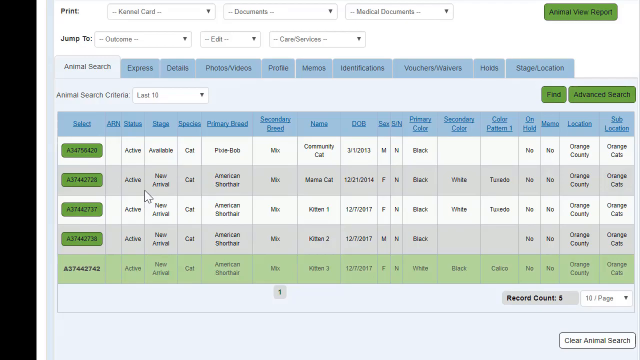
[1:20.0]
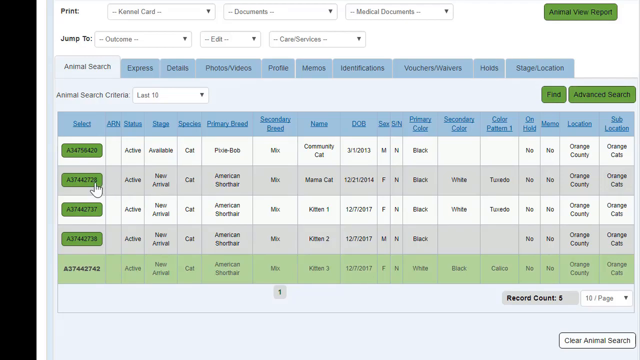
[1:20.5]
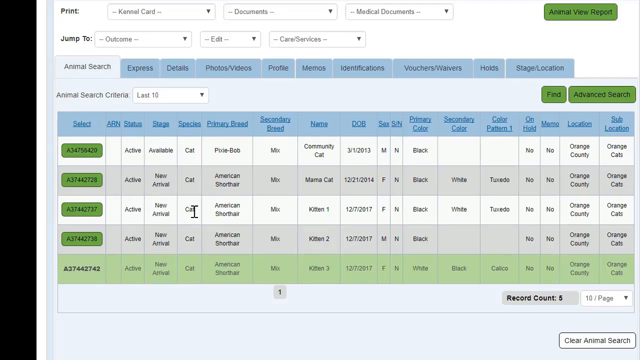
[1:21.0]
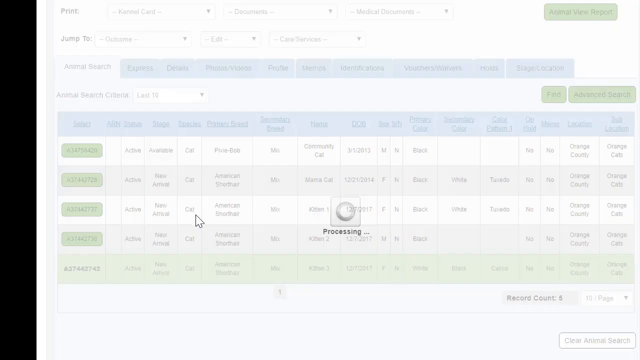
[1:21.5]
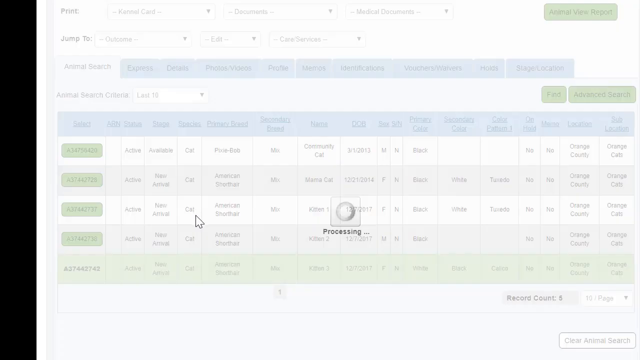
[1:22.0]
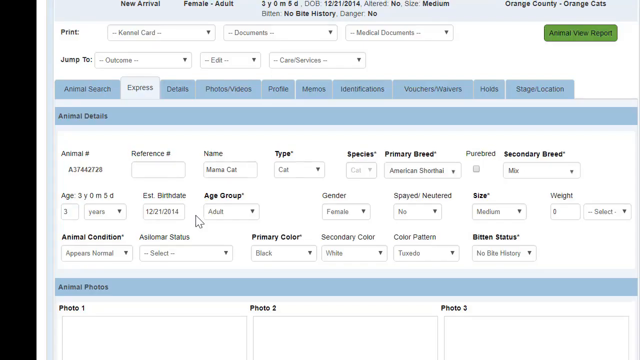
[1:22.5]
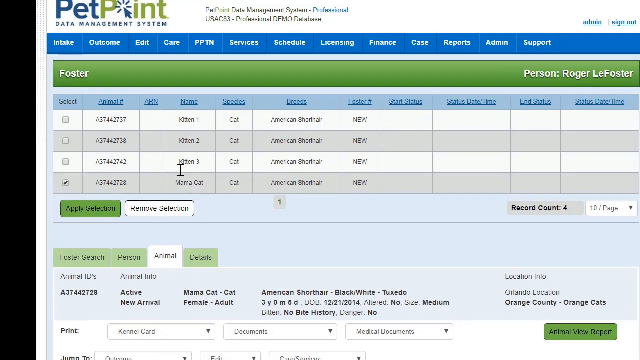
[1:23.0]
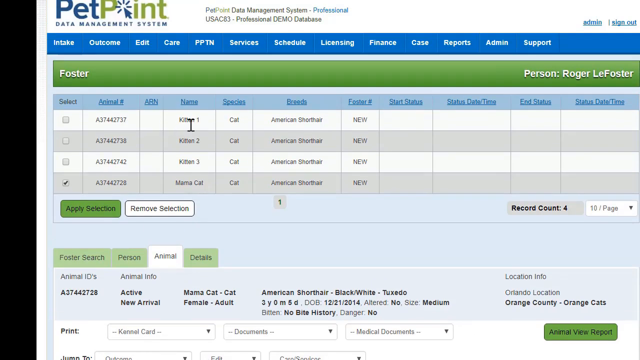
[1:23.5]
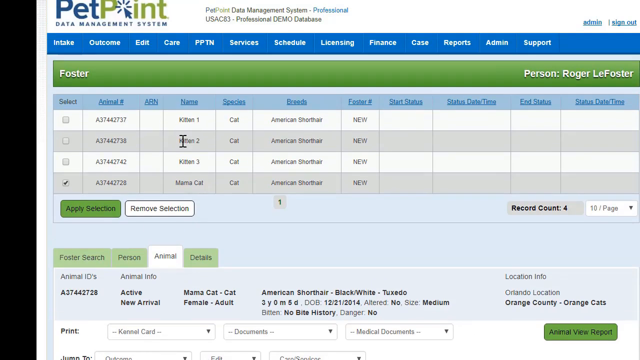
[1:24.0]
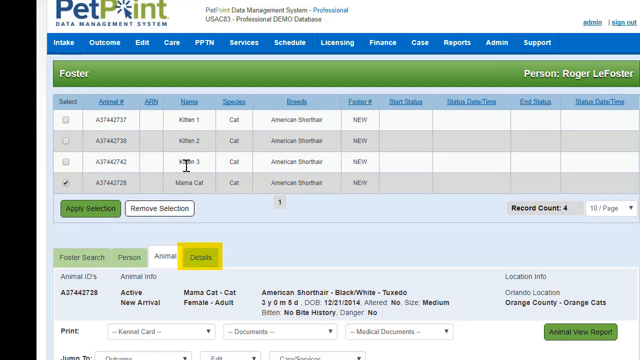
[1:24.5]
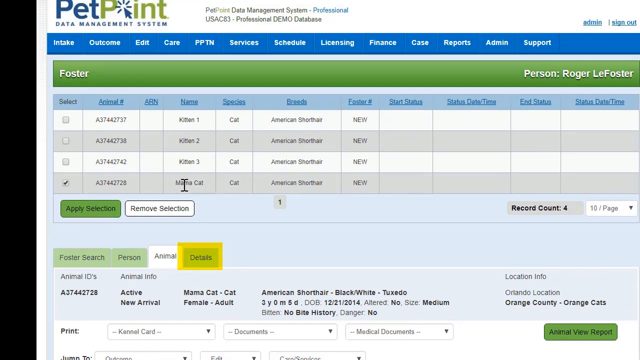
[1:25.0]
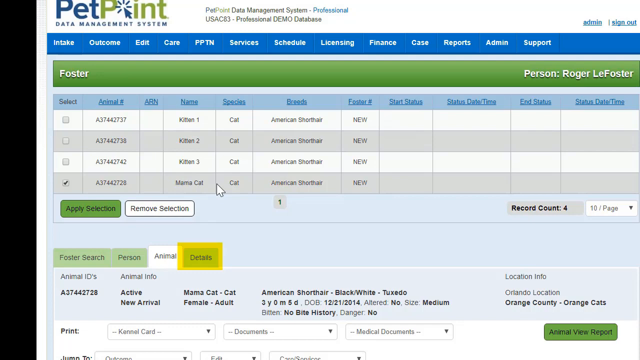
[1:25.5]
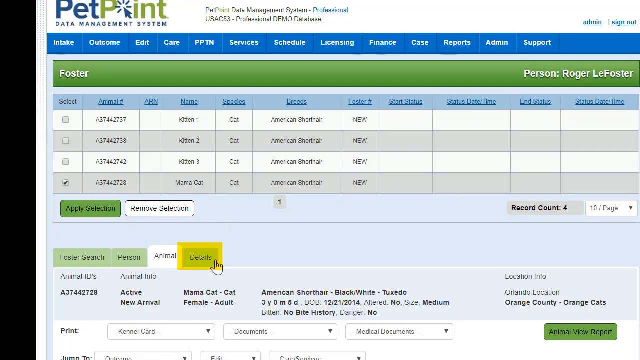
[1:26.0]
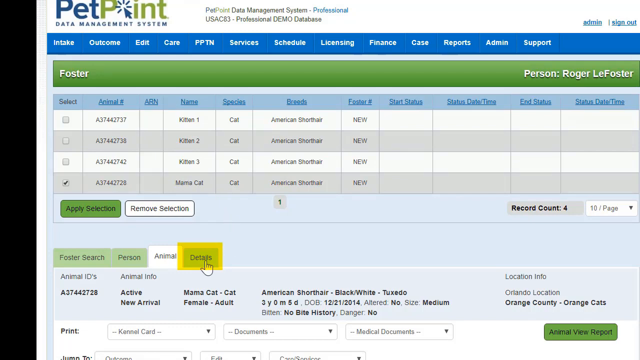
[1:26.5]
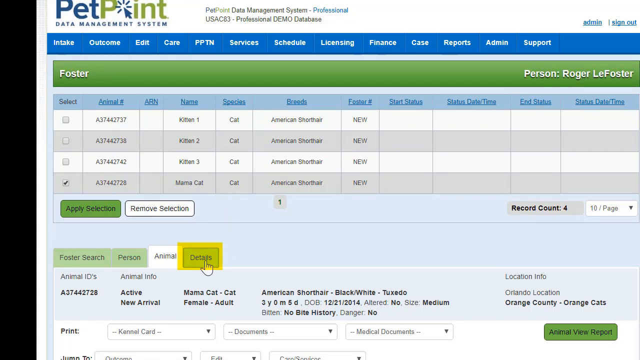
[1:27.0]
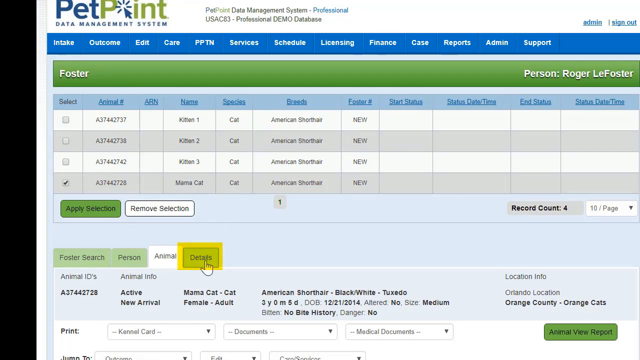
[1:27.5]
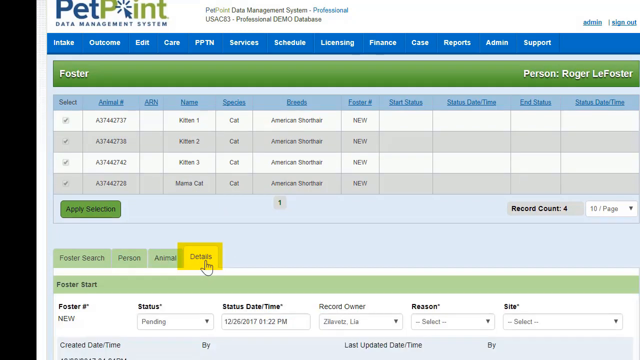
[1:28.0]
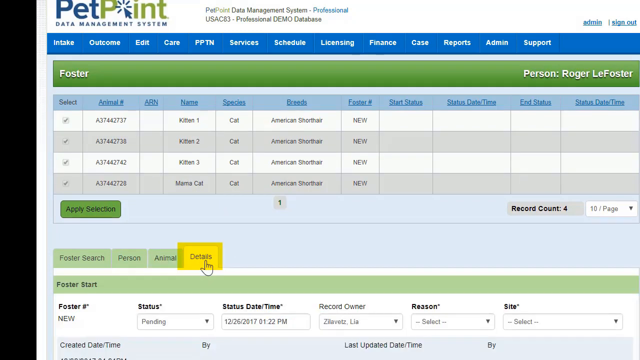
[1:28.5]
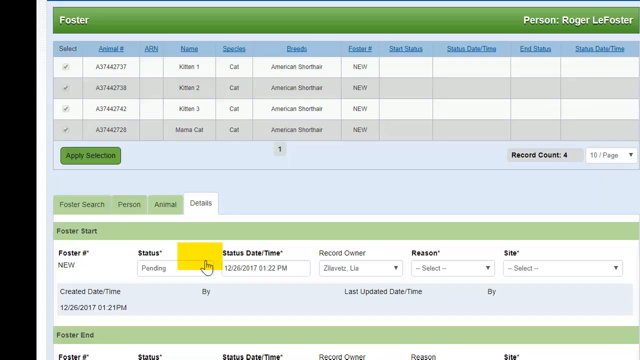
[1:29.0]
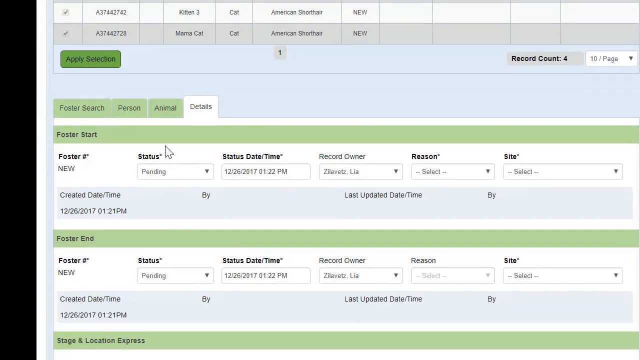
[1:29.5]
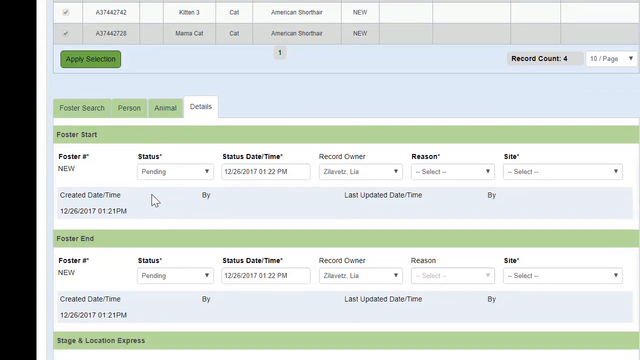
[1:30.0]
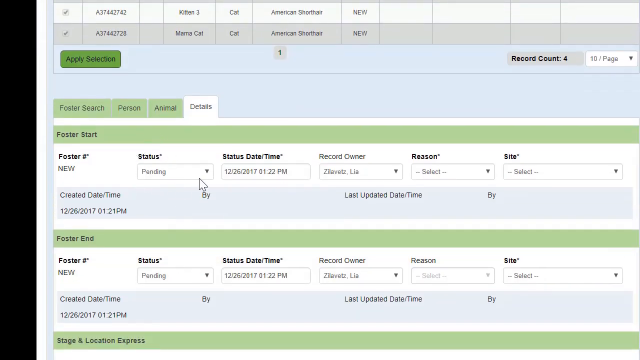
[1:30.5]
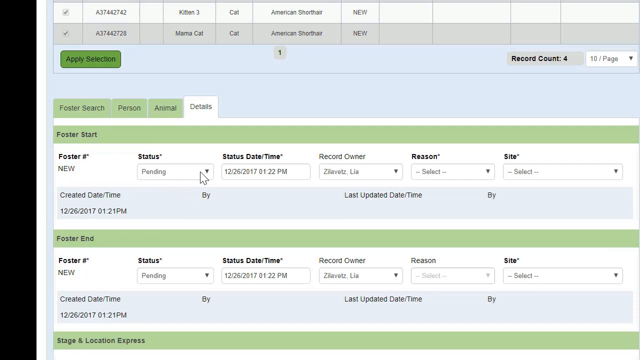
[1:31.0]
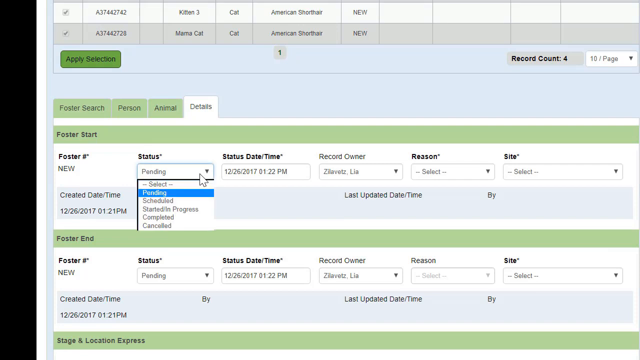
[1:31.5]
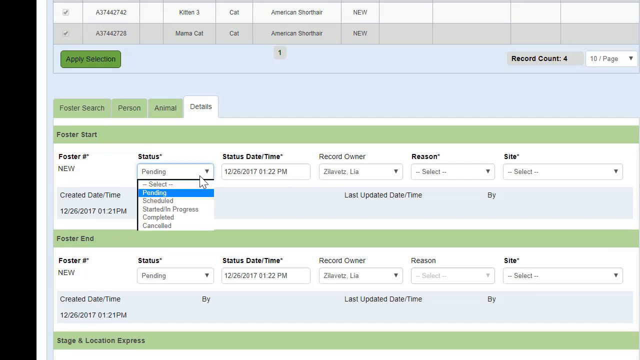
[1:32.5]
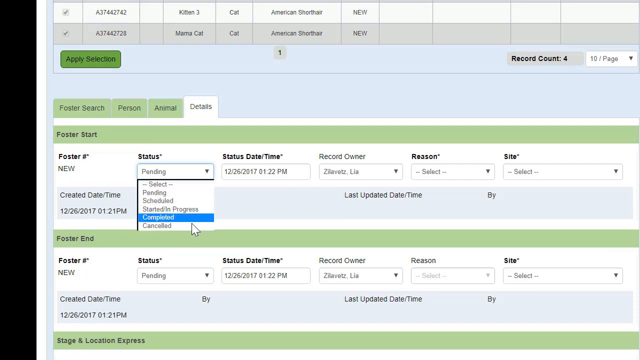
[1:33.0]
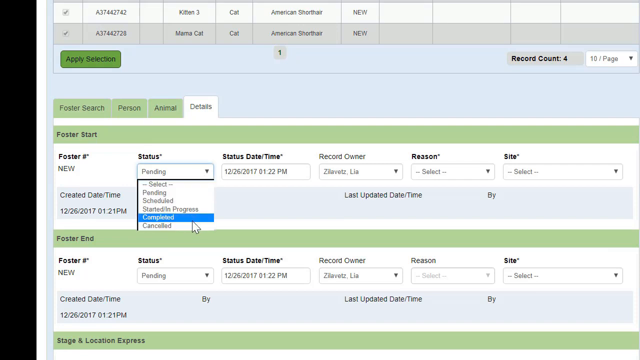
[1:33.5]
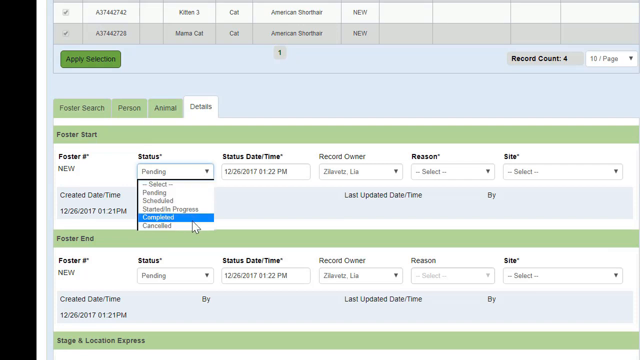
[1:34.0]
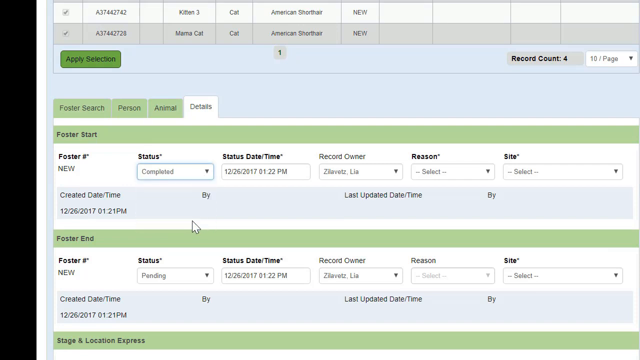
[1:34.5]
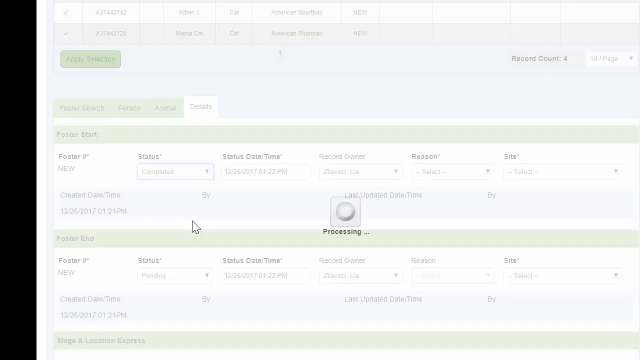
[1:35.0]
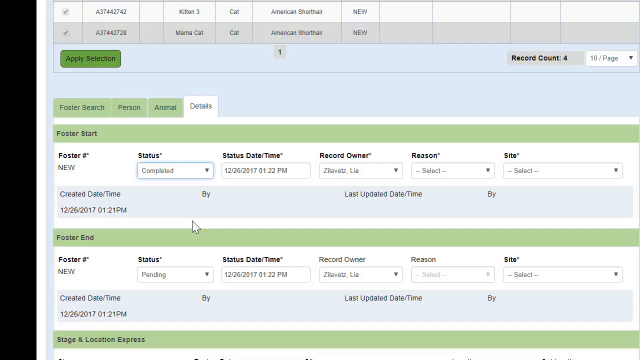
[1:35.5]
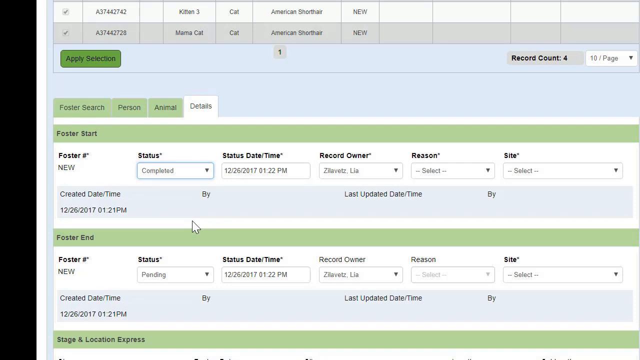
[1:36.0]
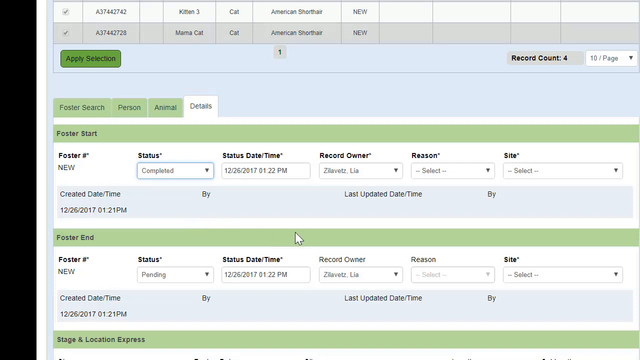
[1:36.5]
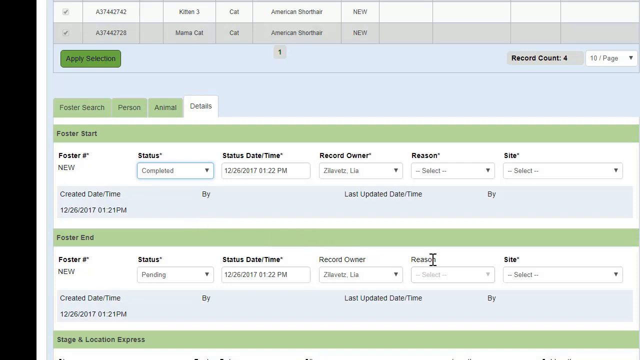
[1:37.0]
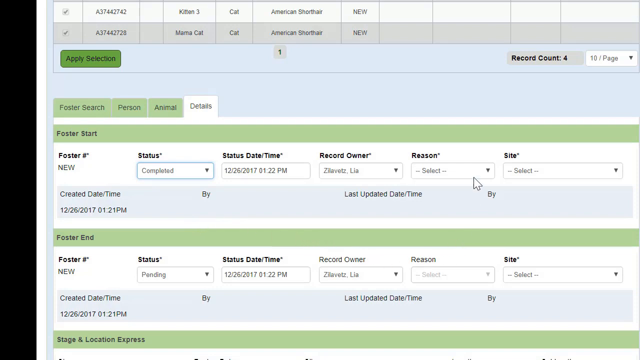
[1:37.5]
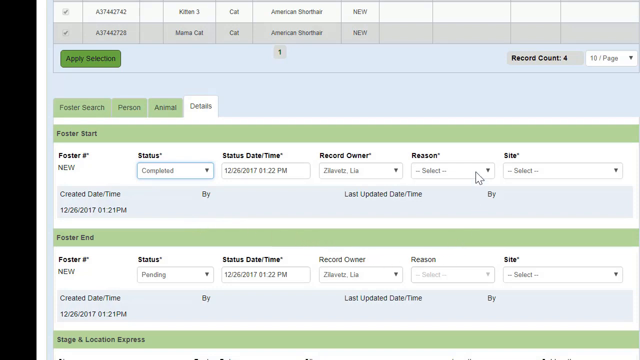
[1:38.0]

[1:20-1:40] The animal search criteria chart lists five different animals, and the cursor clicks the second option, with the animal ID number A37442728. When this loads, the animal has been added to the foster chart for Roger LeFoster, which now lists four animals, with a checkbox only in the last option for the newly added animal. Toward the bottom of the page the Details tab is highlighted, and the user clicks it. The page reloads somewhat, and in the foster chart at the top of the page listing the four animals, all of the checkboxes are selected. The user scrolls down the page, and in the Foster Start panel clicks the drop-down menu under Status and selects "completed." The page reloads somewhat to record and save this.